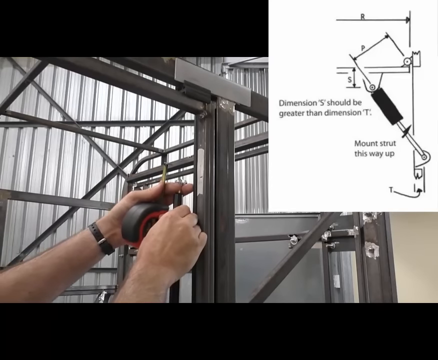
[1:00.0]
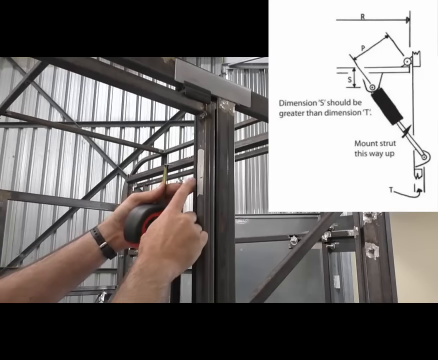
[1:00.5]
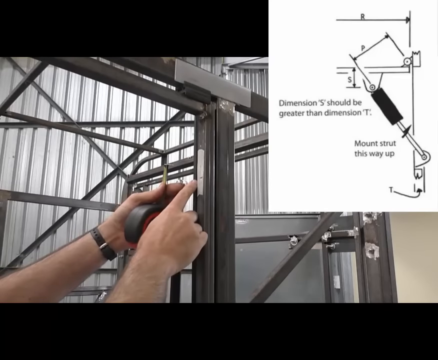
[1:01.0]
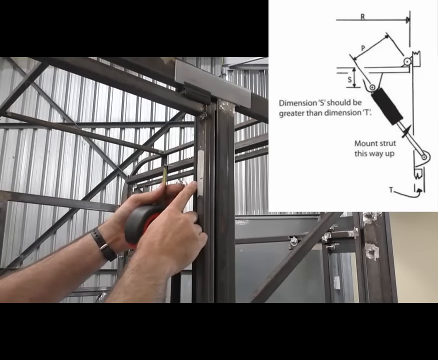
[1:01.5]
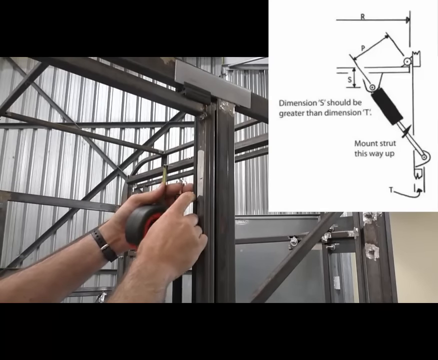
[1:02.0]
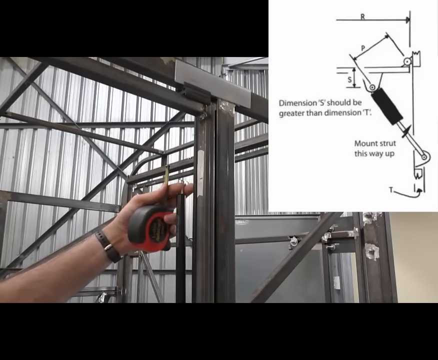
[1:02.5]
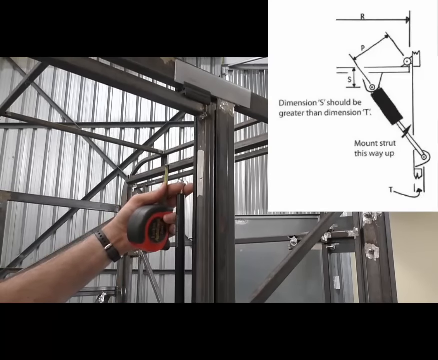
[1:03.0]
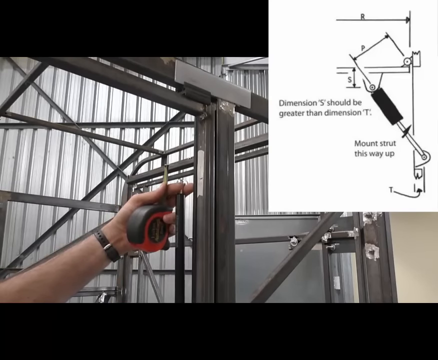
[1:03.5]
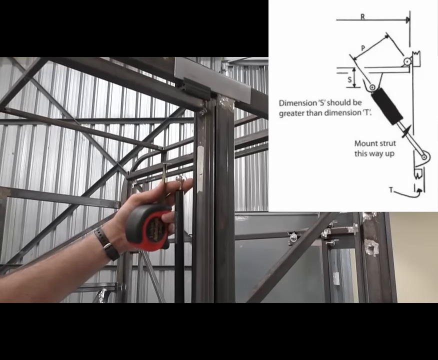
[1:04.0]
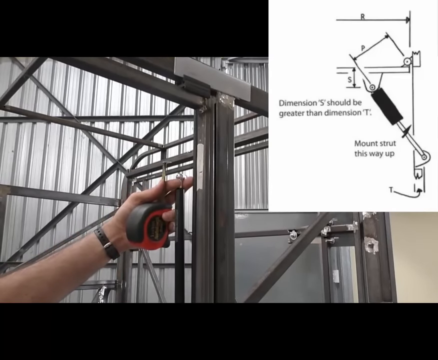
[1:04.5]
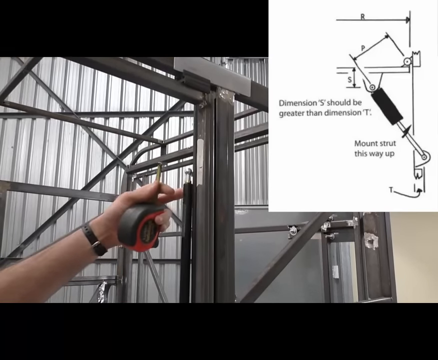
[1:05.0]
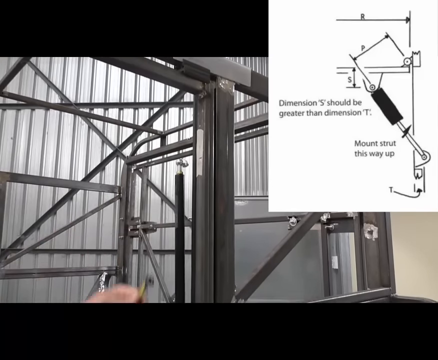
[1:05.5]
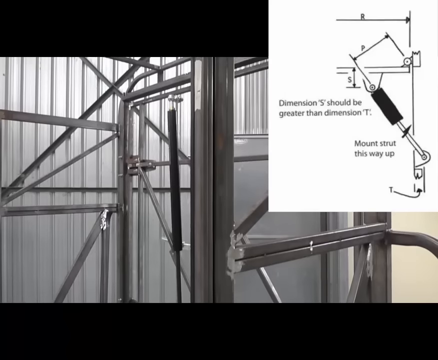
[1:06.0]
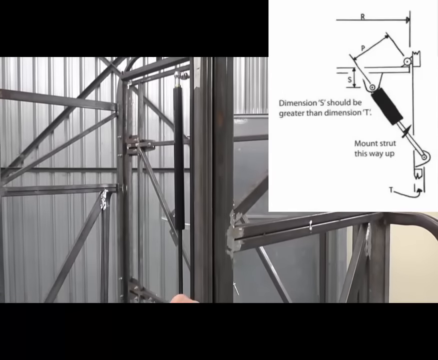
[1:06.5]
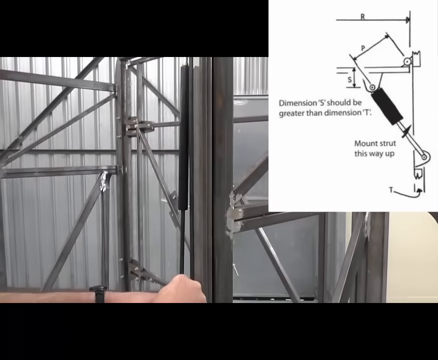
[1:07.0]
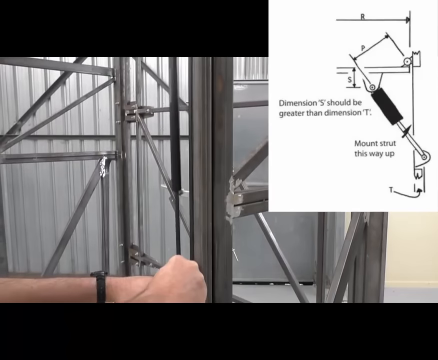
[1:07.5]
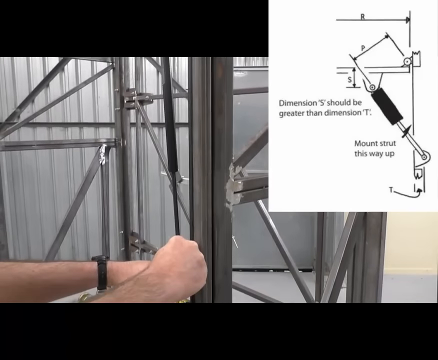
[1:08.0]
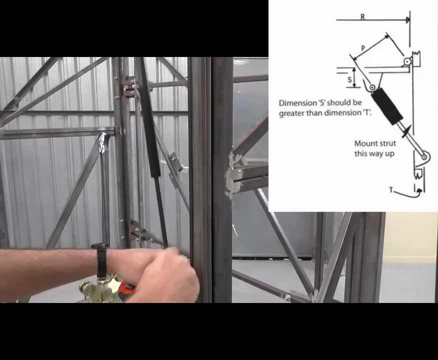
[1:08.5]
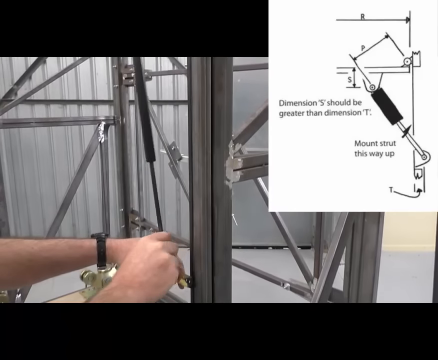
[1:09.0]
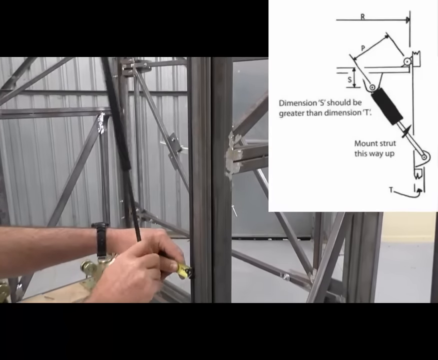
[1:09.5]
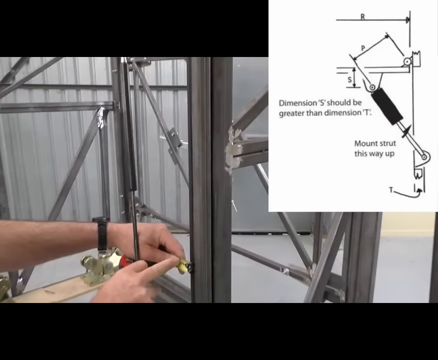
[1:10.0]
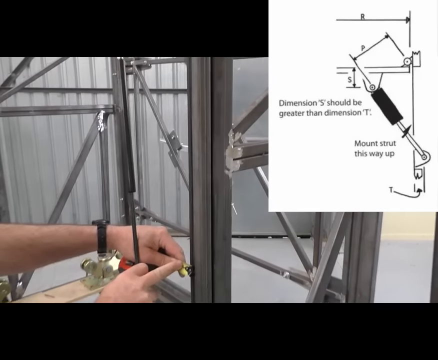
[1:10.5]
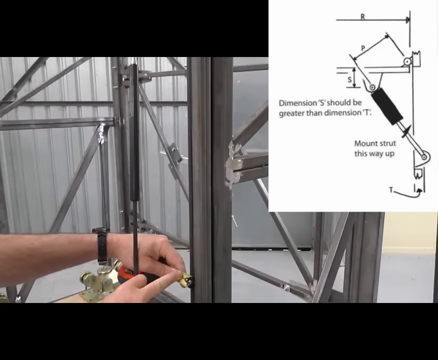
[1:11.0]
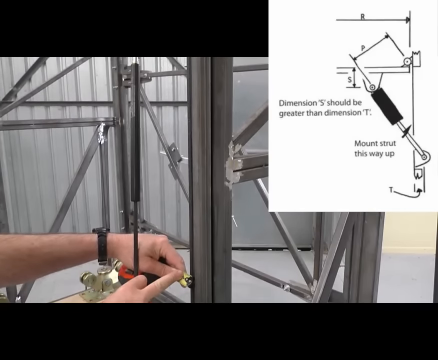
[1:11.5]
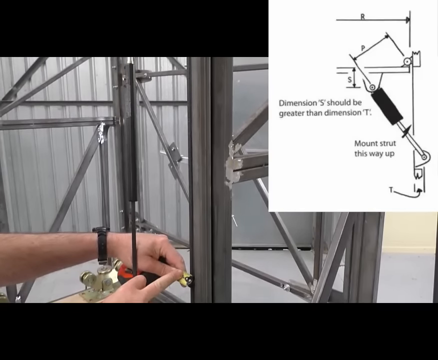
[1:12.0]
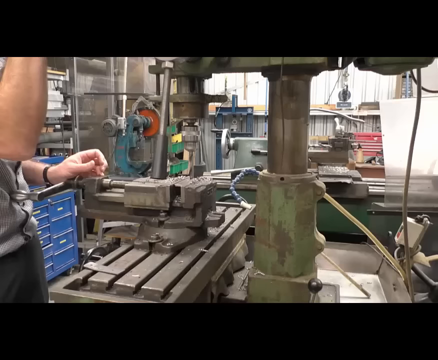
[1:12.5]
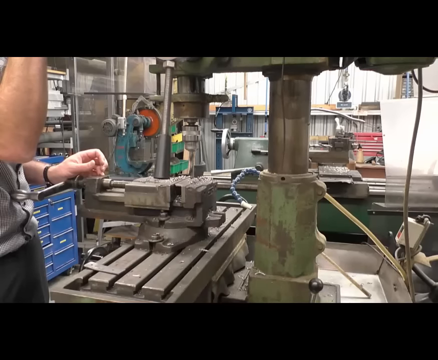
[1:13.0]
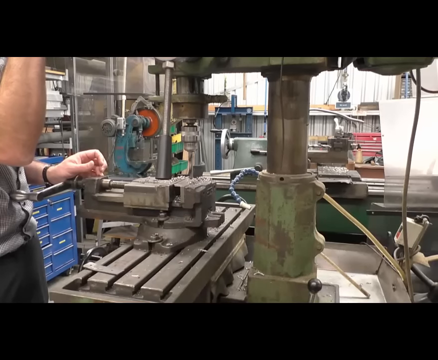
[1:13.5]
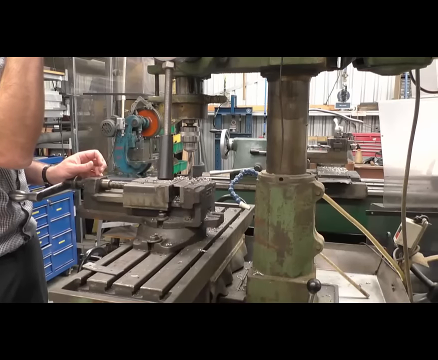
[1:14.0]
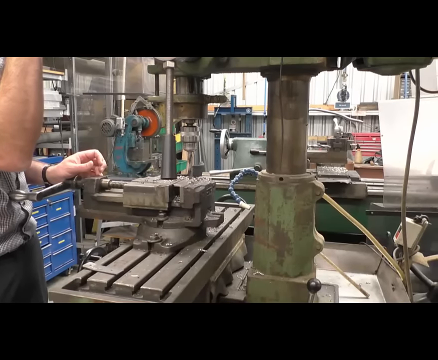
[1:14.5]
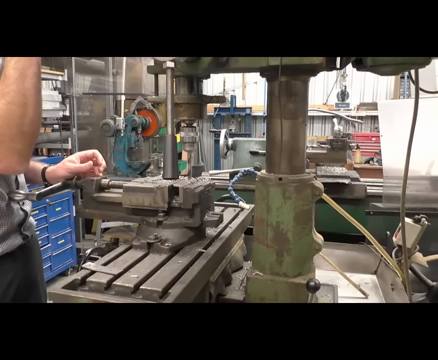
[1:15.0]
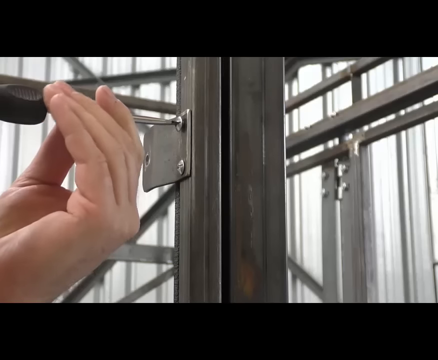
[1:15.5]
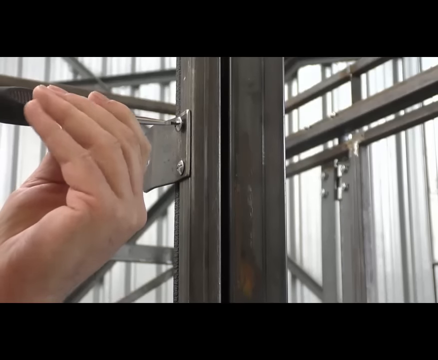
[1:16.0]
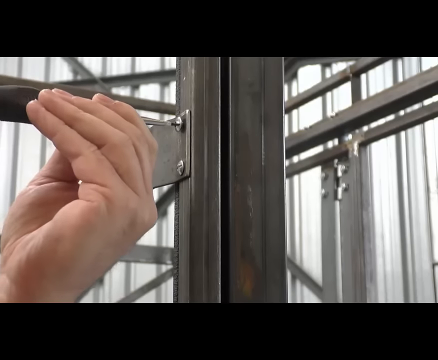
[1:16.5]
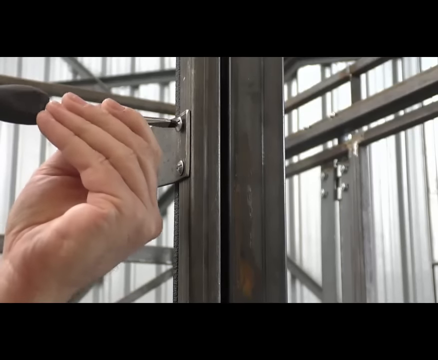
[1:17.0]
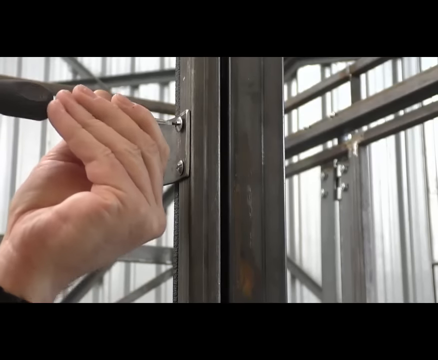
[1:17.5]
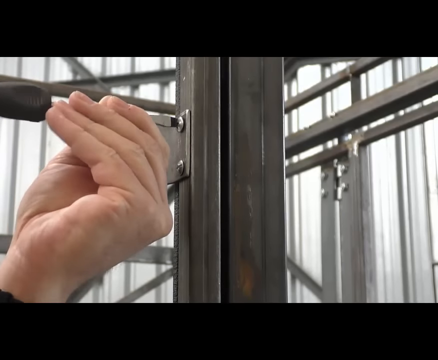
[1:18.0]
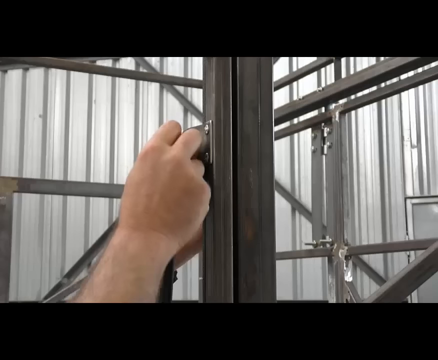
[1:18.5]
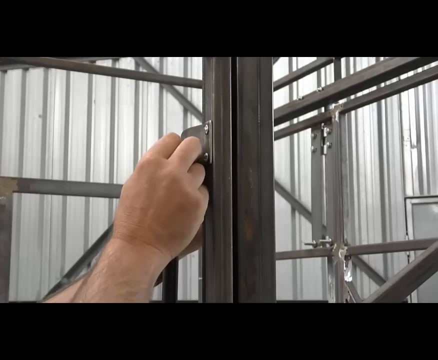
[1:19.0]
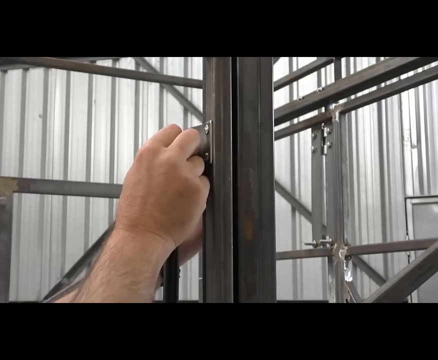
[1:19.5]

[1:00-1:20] The man's hands appear on the left as he puts in some type of tool, then he holds the measuring tape, and a small diagram appears. The view changes and then returns to the metal structure he has been working on. He seems to be explaining something about the measurements. Another angle shows some type of machine making something, with part of a person visible. The place looks like some type of warehouse, possibly a manufacturer or a garage where these parts are made. The man wears a black watch on his left wrist and uses his right hand more than his left.